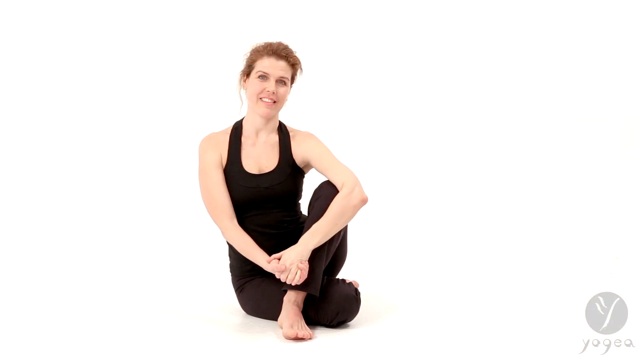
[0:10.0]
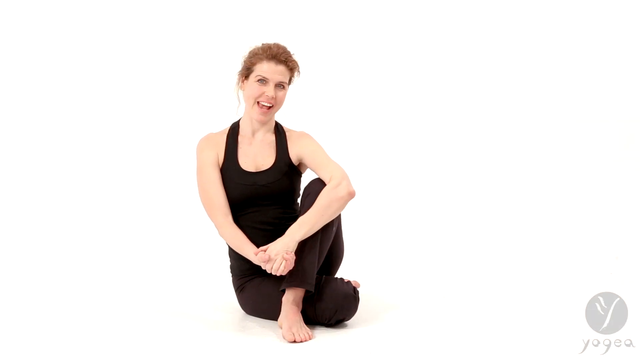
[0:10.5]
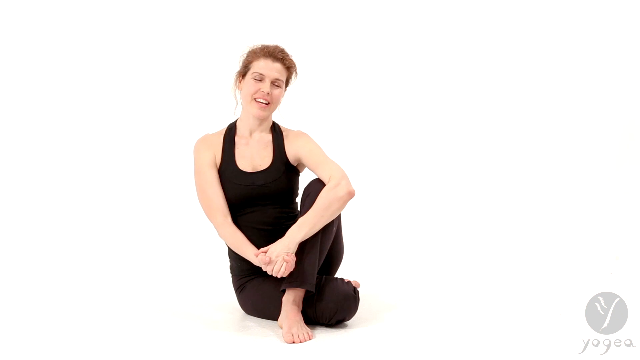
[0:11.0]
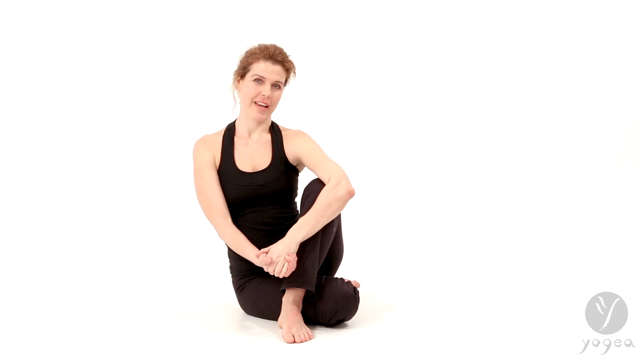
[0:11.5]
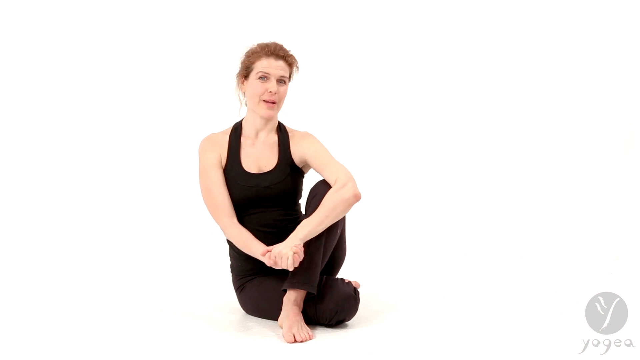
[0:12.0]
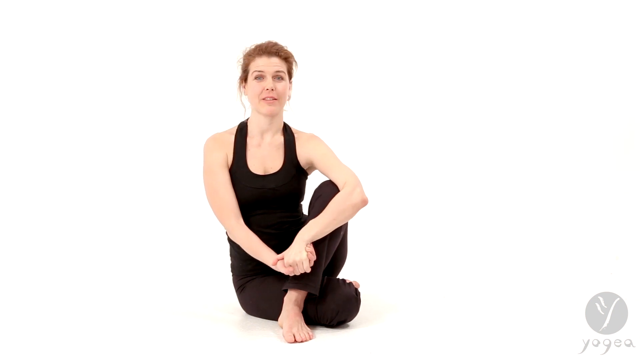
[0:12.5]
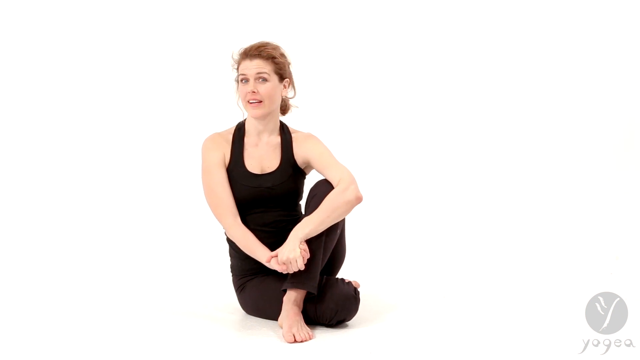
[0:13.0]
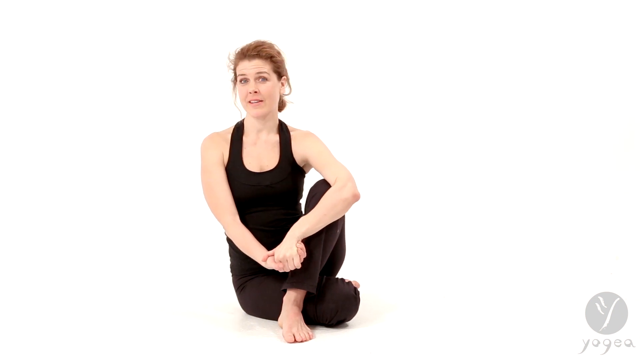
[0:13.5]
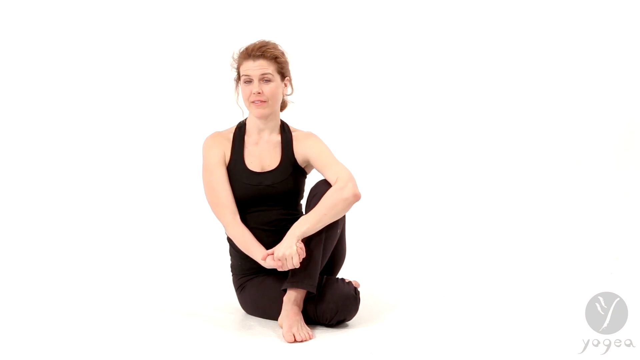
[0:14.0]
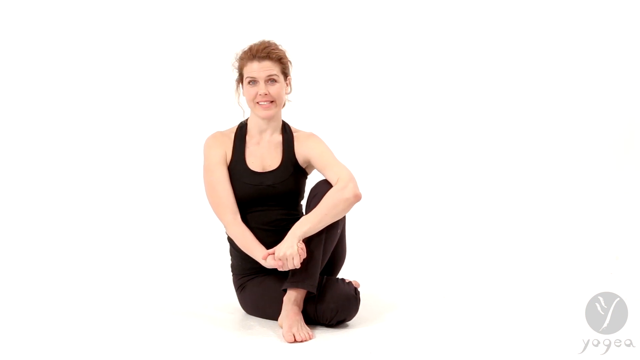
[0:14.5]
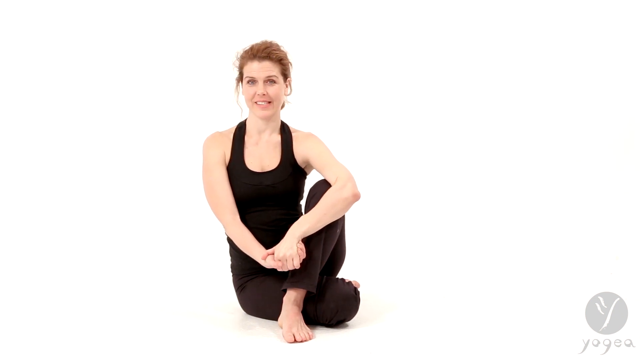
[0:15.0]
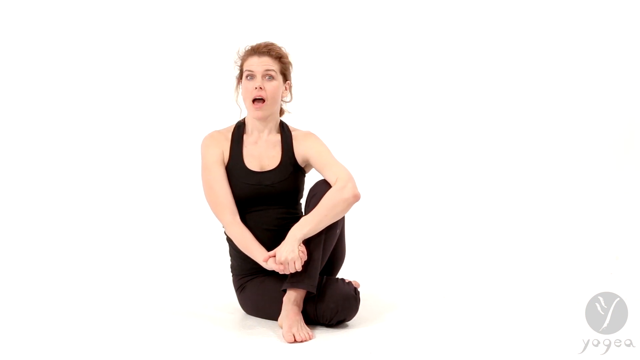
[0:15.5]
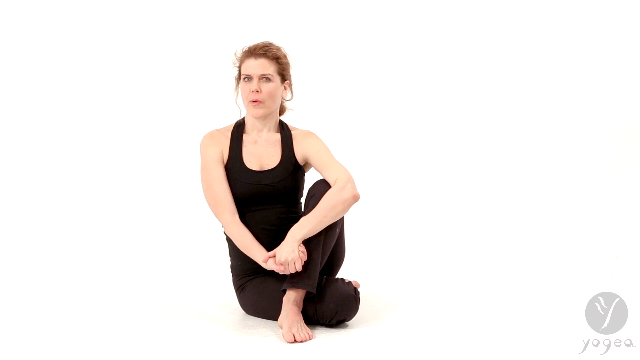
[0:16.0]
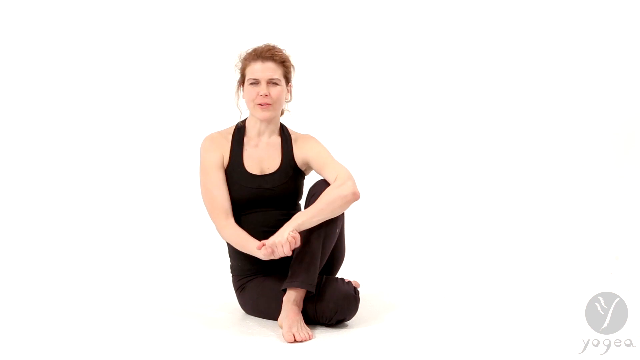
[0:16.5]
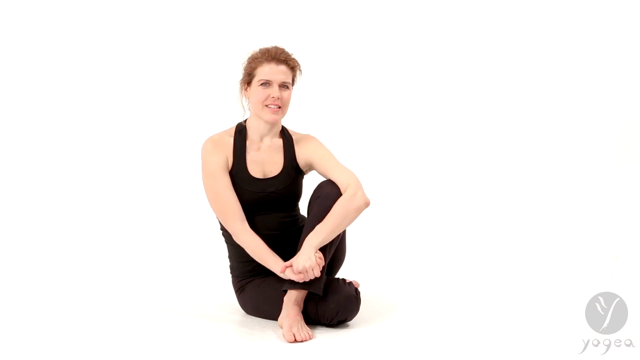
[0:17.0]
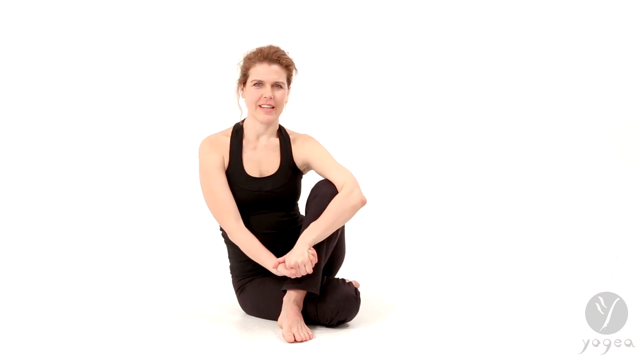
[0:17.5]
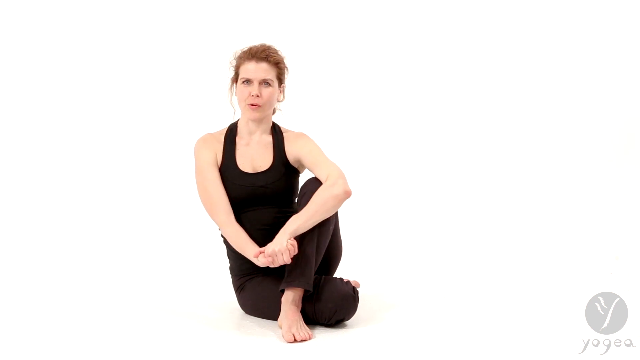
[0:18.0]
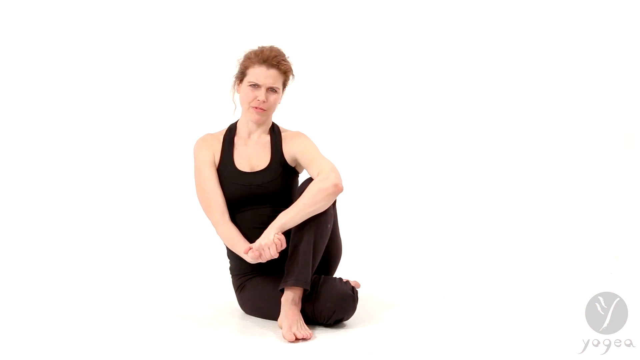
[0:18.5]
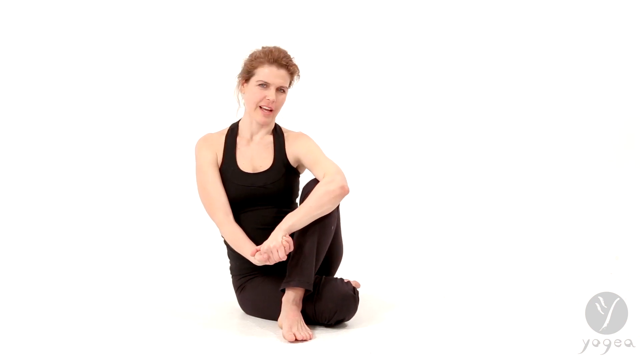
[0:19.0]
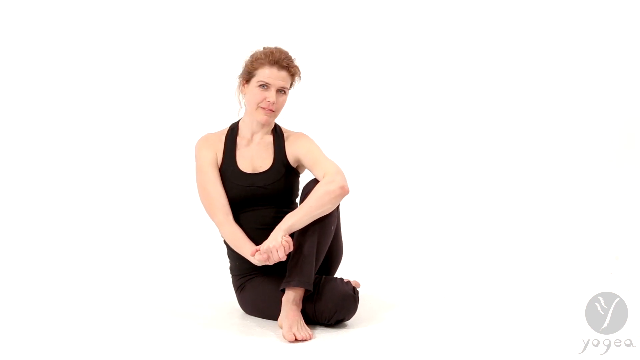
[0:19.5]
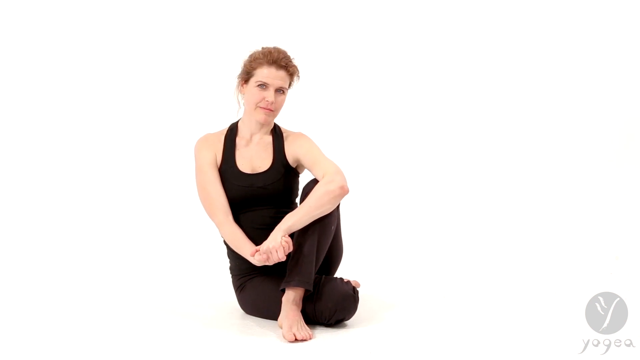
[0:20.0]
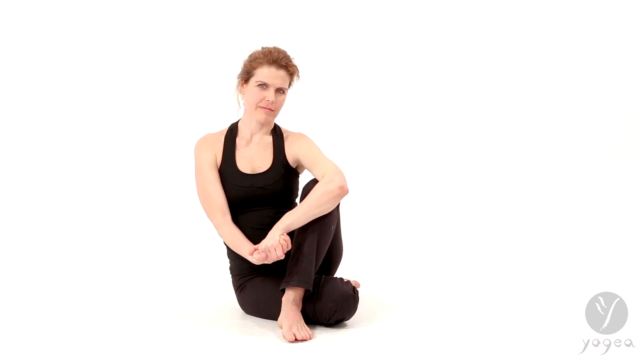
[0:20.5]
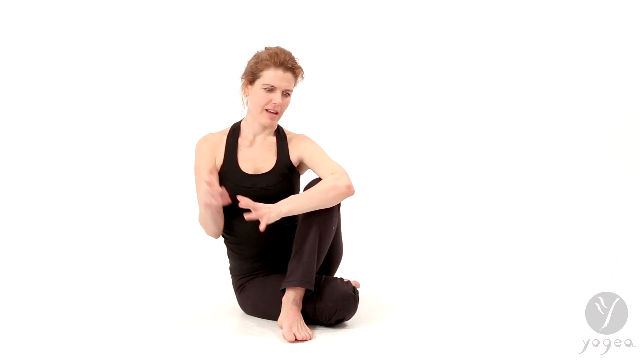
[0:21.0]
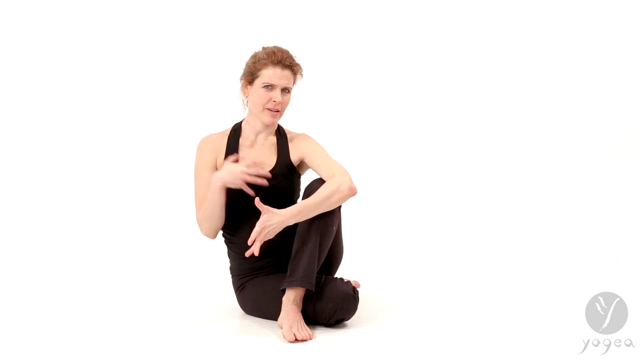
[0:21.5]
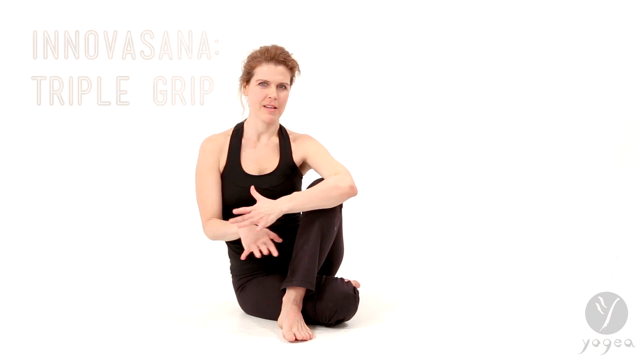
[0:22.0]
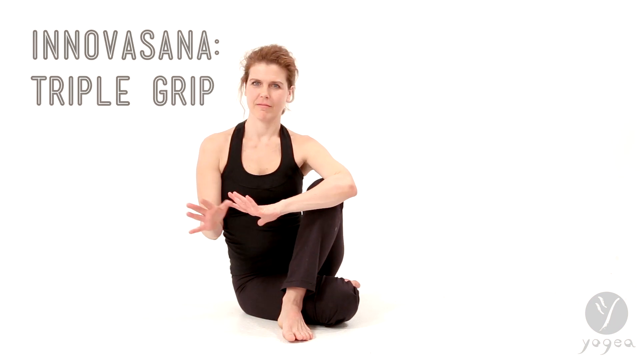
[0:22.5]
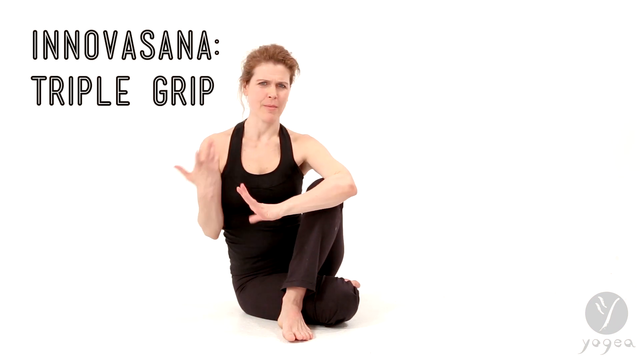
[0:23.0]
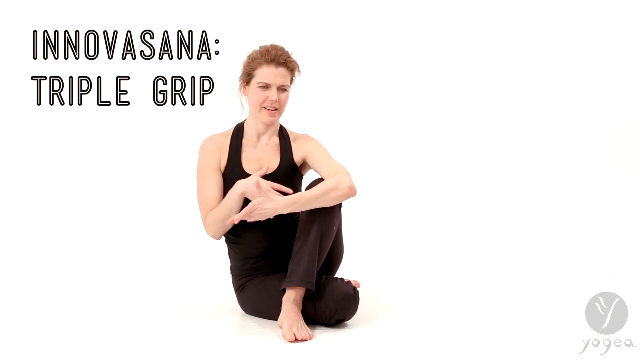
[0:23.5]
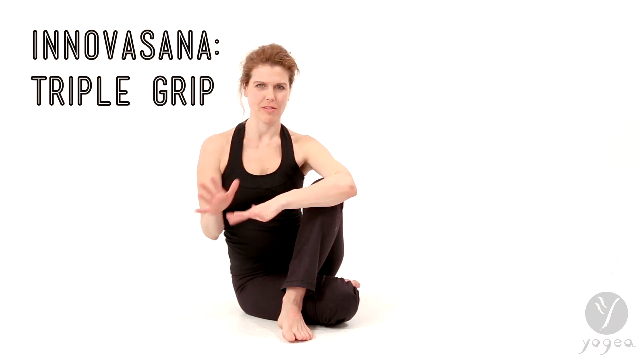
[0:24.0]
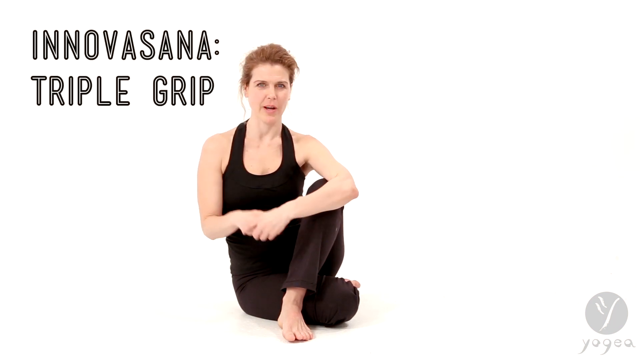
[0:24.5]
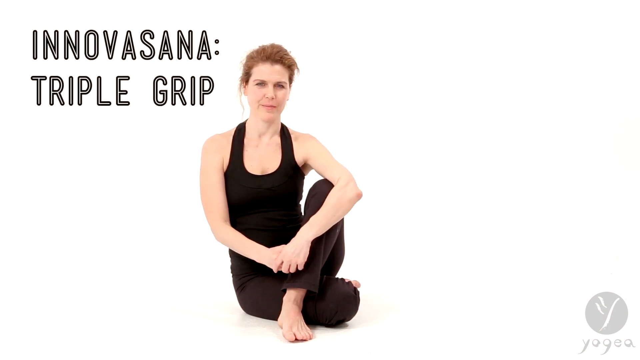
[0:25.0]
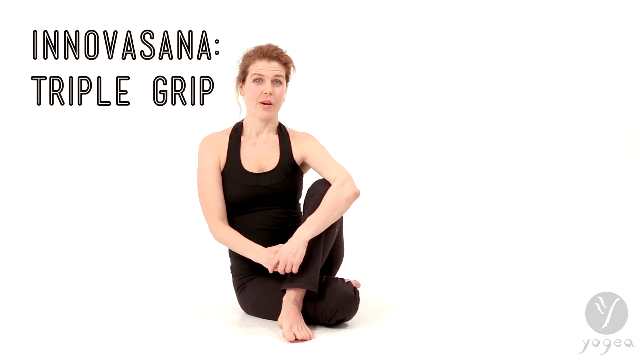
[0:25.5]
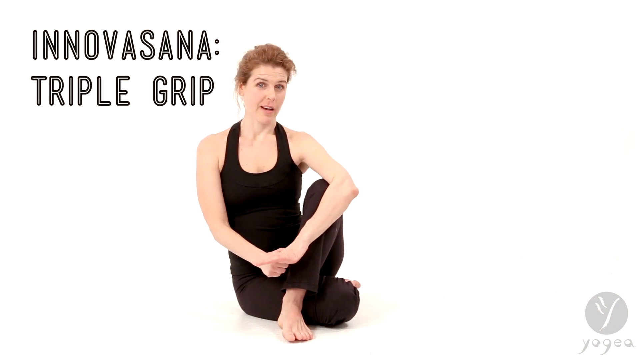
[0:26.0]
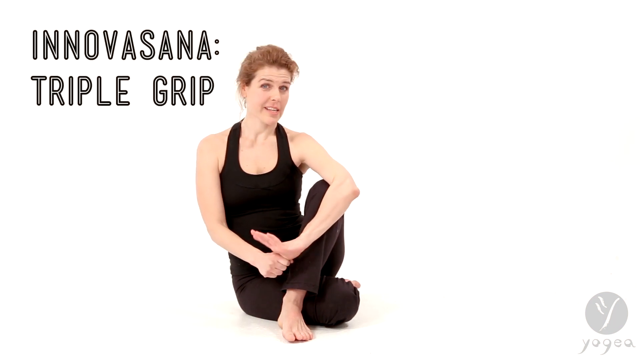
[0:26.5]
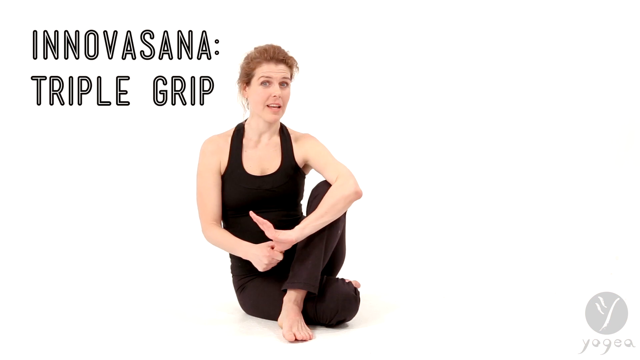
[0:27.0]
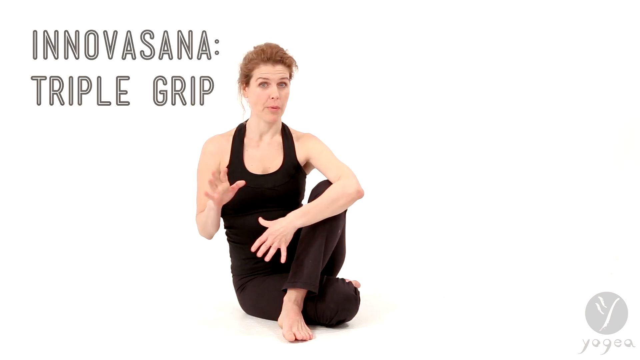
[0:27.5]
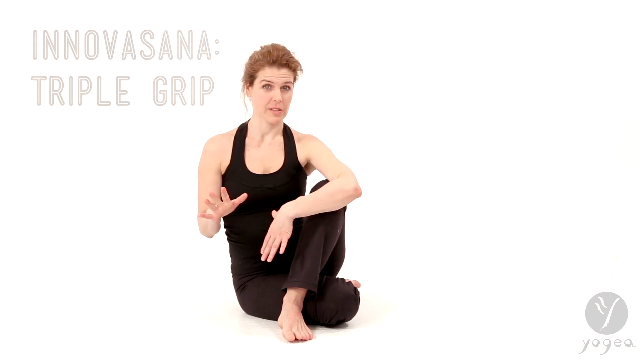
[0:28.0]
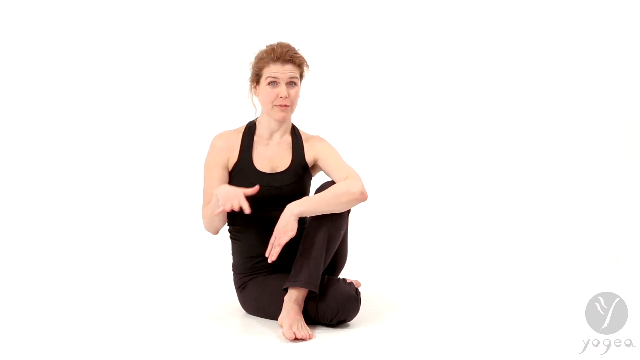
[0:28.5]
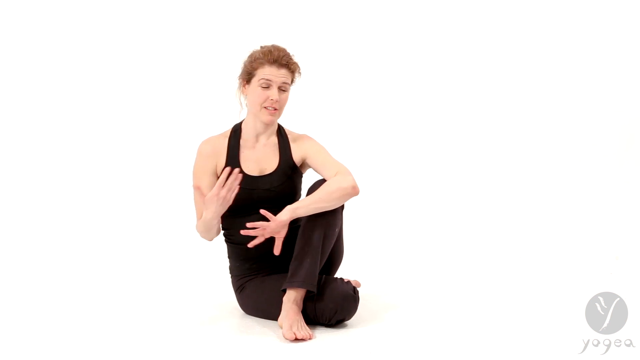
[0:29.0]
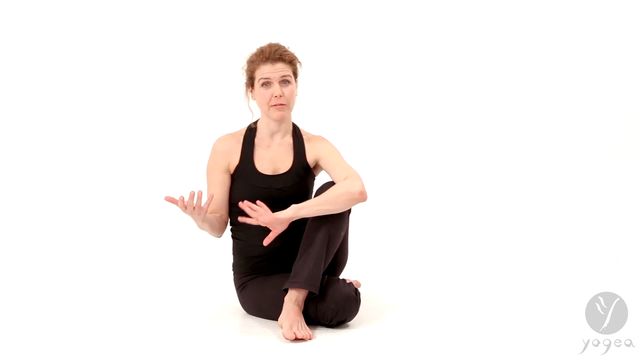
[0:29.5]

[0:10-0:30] The woman in the yoga top and trousers sits on a white floor against a white background. Her left leg is tucked around, with her foot at the bottom of her right thigh. Her right leg is bent, with the foot placed in front of her left thigh. Her hands are clasped together, with her right elbow around her right knee, and her right thumb goes around the base of her left hand. Her brown hair is tied up, and she smiles to the camera as she talks. As she speaks, she raises her clasped hands slightly and lowers them again. Her hands then separate: she raises her left arm, still bent at the elbow, so her hand is towards her shoulder, with her fingers separated. Her right hand stays in the same place, but with the fingers and thumb spread apart. She moves her hands round in a circle, her left hand coming down and moving around her right hand, and she repeats this. The title "Innovesana Triple Grip" comes on the screen. She clasps her hands together again, then raises the fingers of her right hand while keeping her thumb grasped by her left hand. Her hands separate again, and she gestures with her left hand, moving it round in a part circle before it sways back over her right hand.